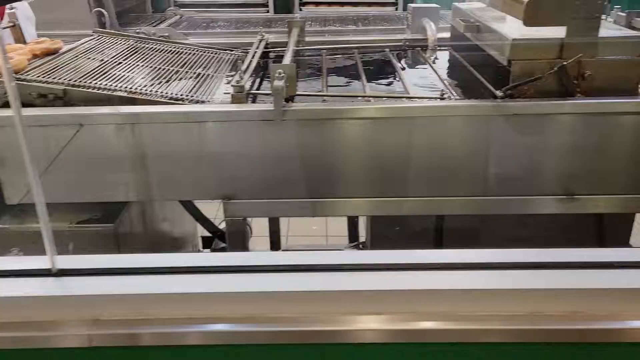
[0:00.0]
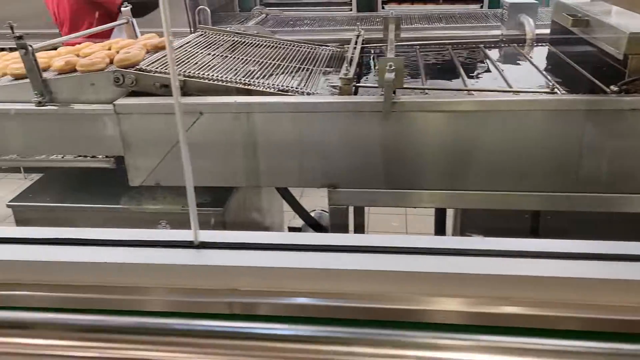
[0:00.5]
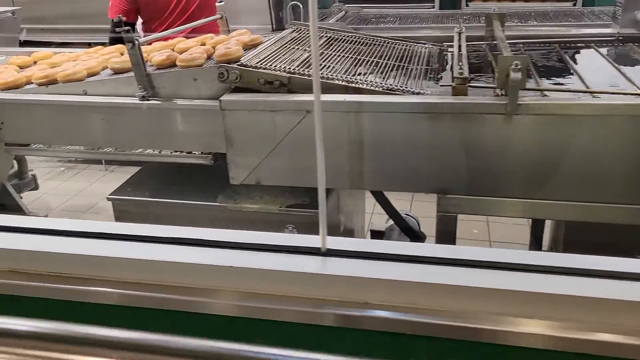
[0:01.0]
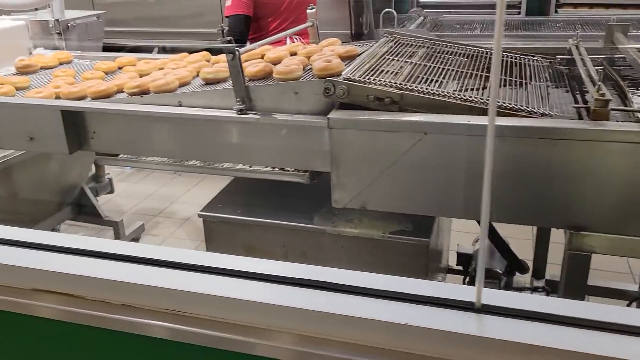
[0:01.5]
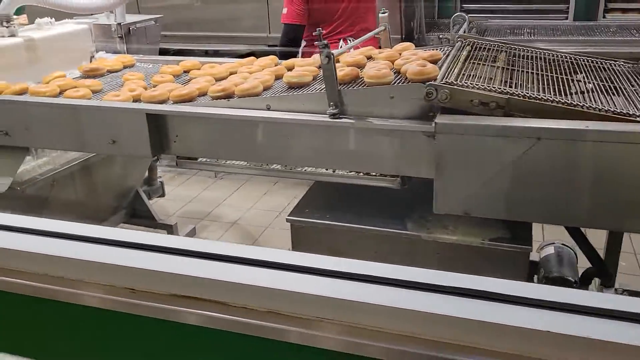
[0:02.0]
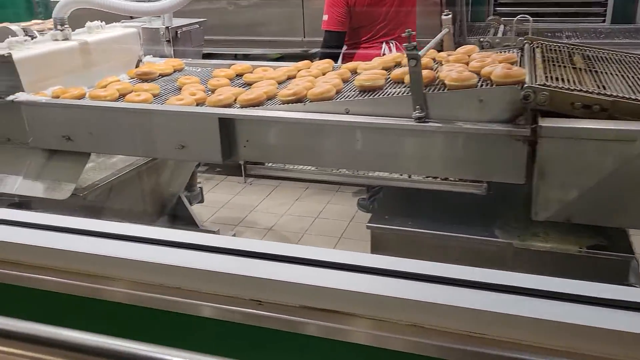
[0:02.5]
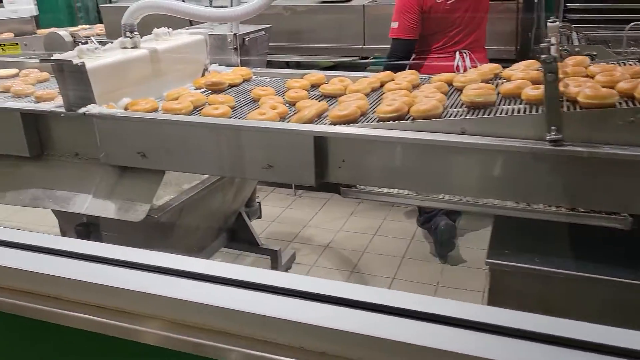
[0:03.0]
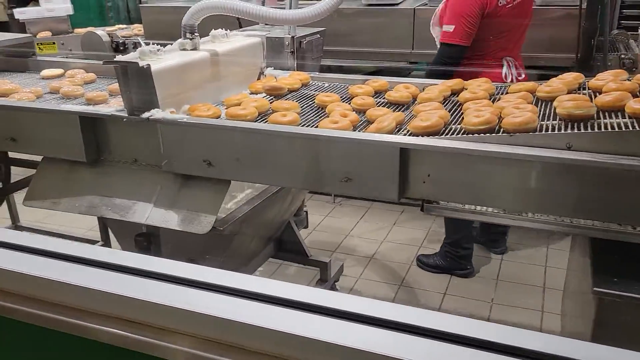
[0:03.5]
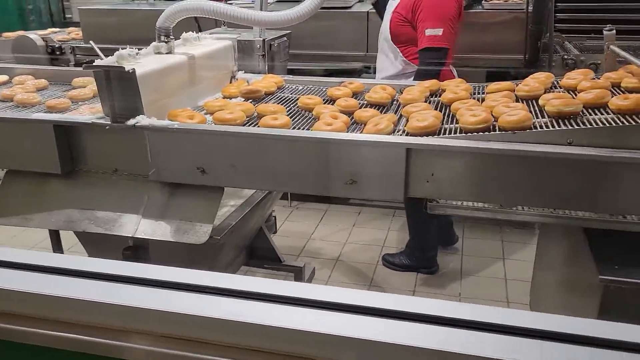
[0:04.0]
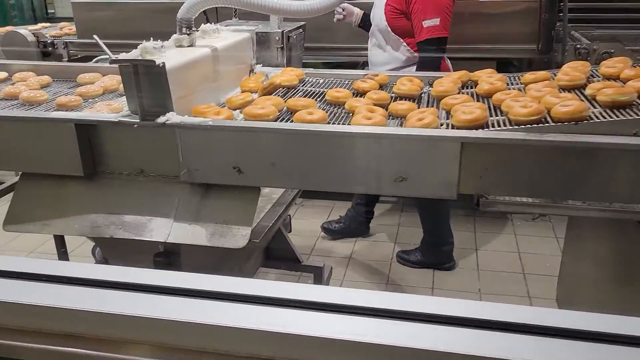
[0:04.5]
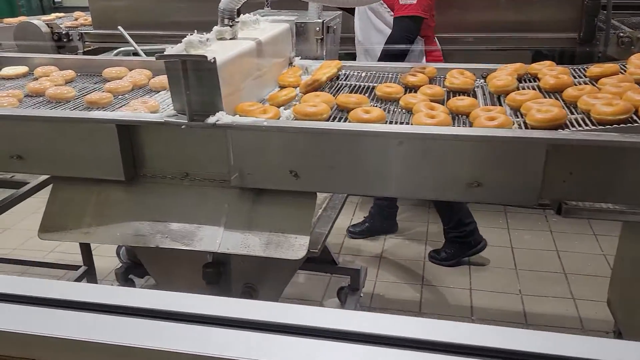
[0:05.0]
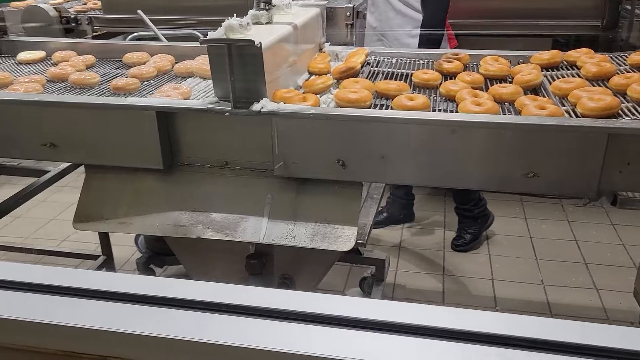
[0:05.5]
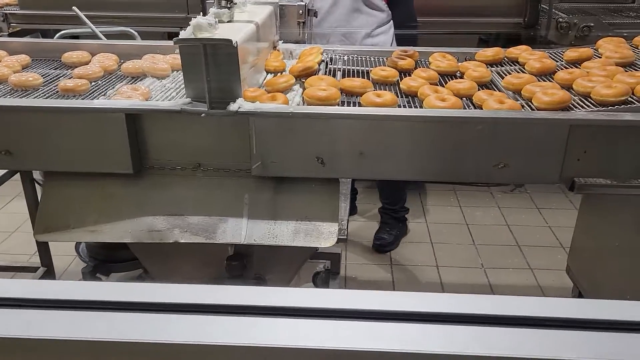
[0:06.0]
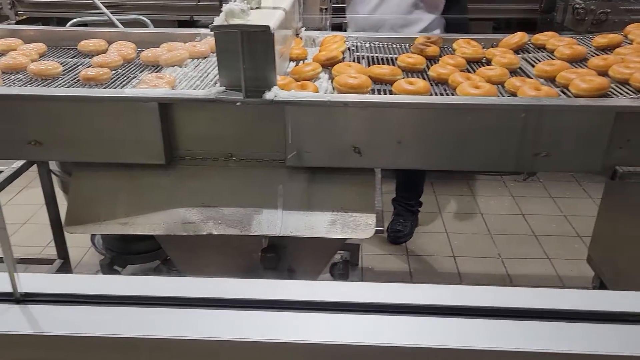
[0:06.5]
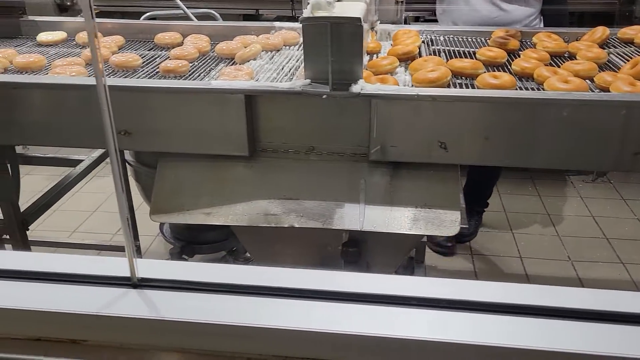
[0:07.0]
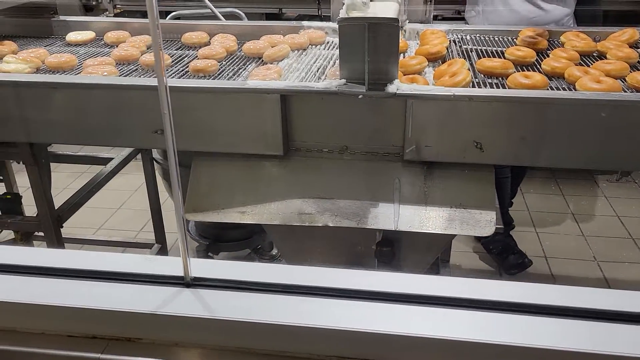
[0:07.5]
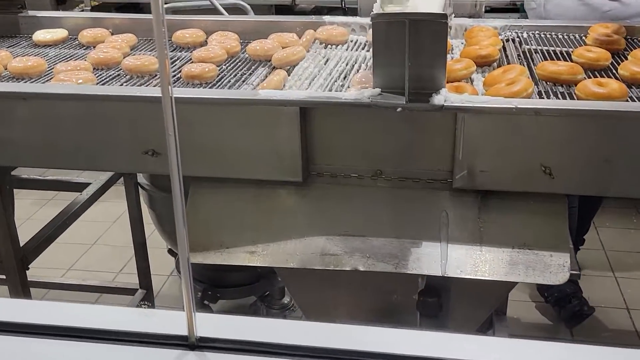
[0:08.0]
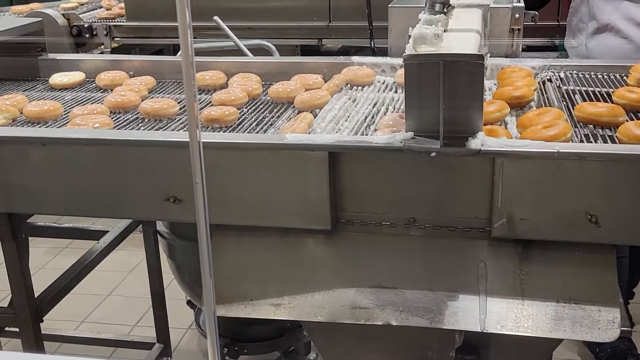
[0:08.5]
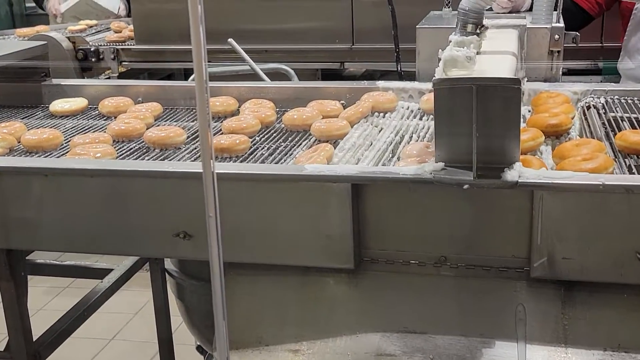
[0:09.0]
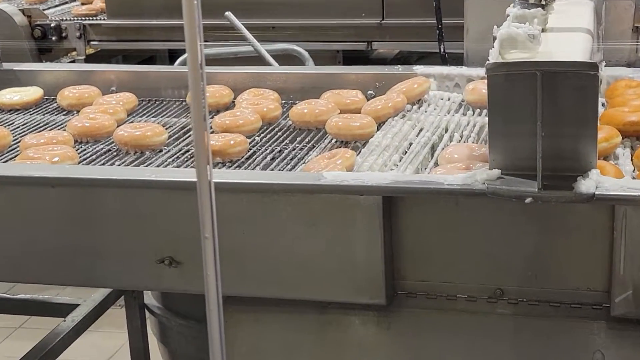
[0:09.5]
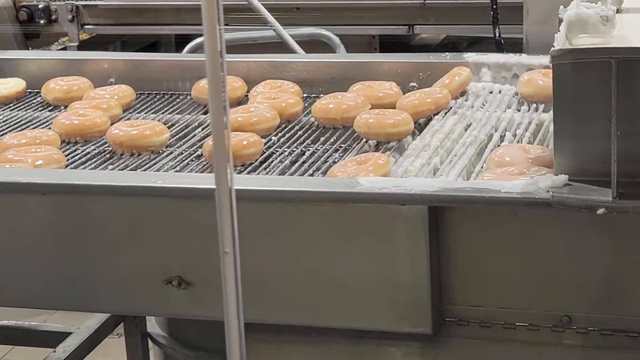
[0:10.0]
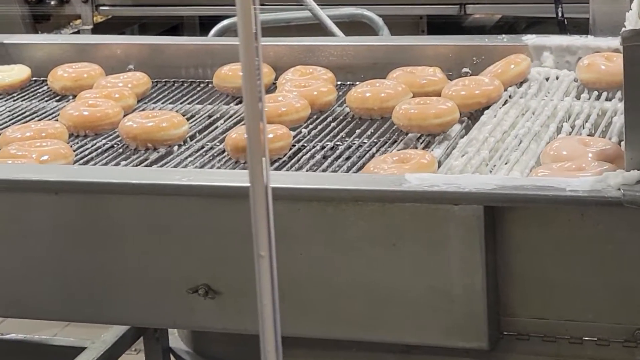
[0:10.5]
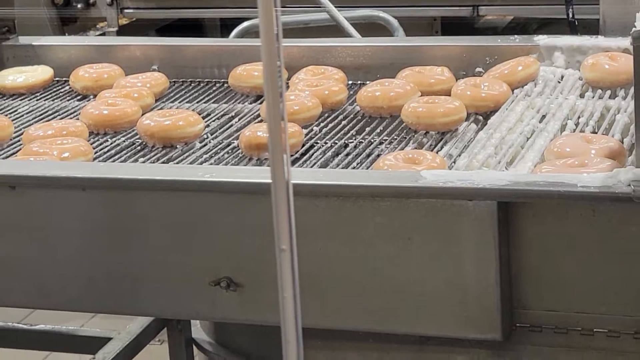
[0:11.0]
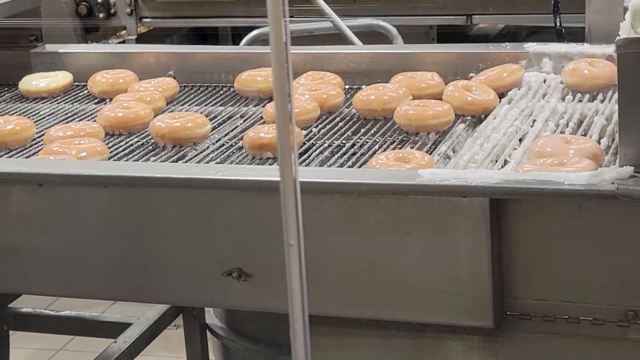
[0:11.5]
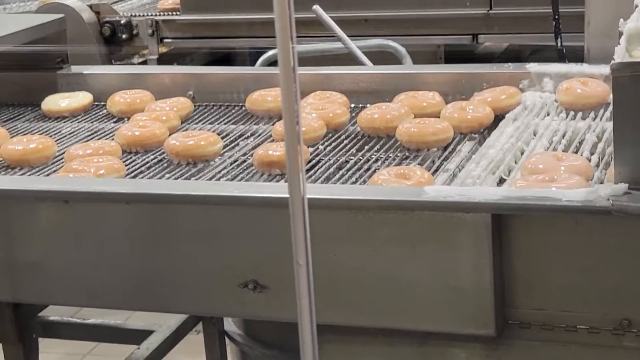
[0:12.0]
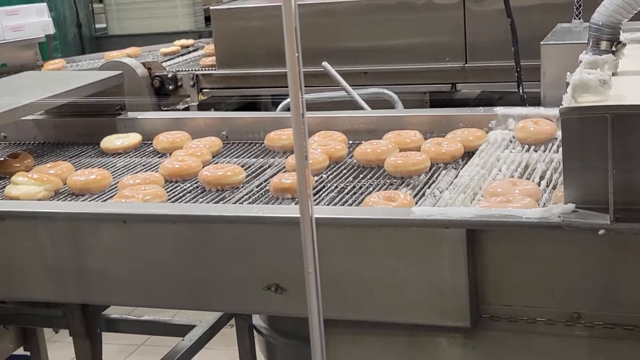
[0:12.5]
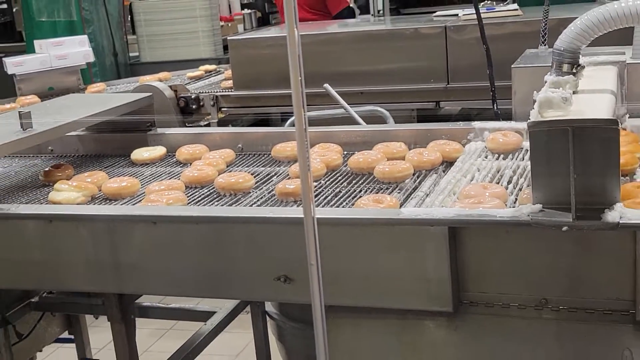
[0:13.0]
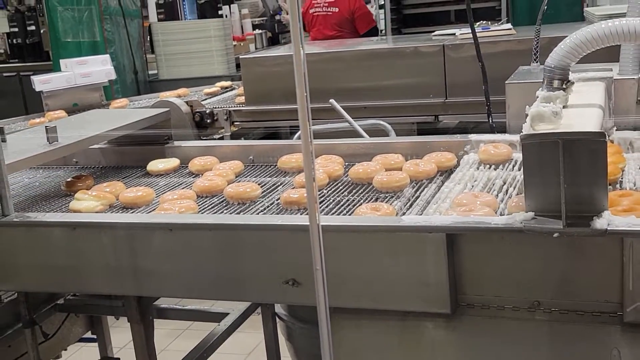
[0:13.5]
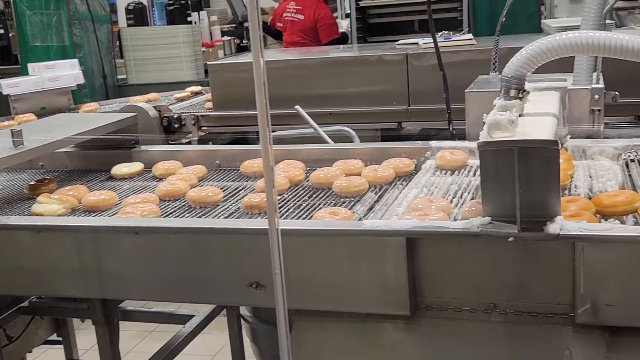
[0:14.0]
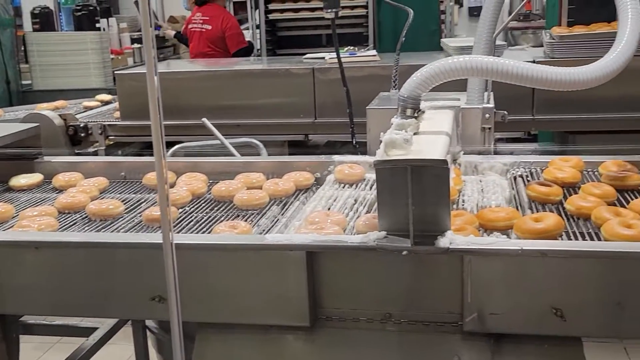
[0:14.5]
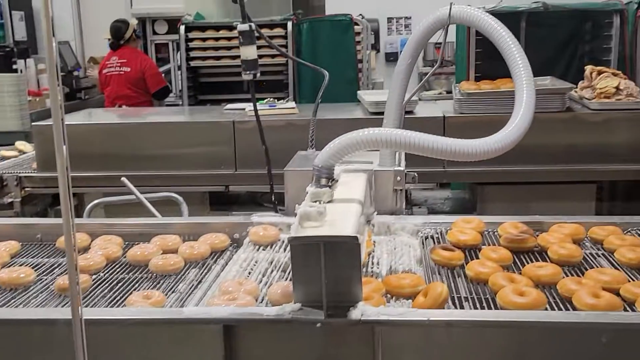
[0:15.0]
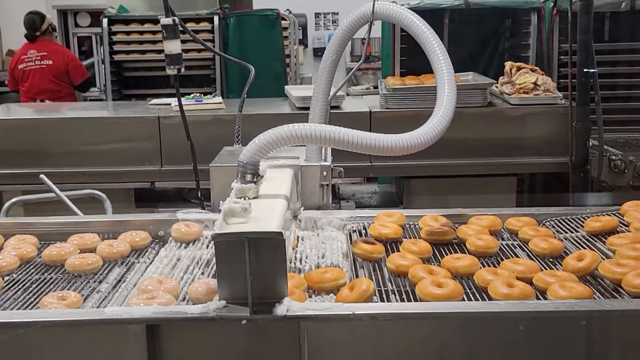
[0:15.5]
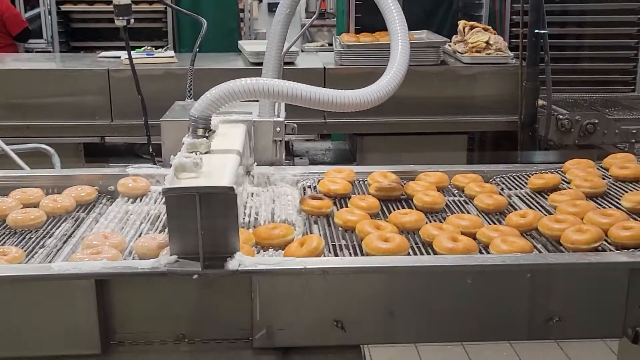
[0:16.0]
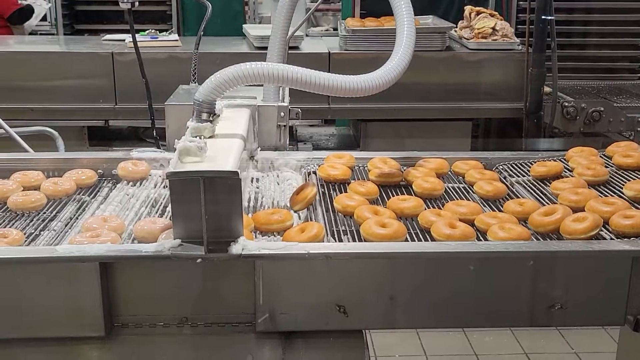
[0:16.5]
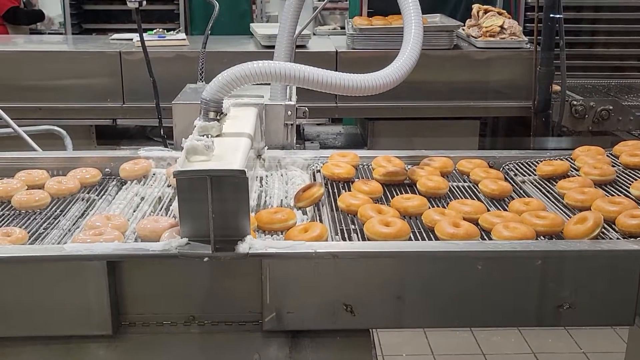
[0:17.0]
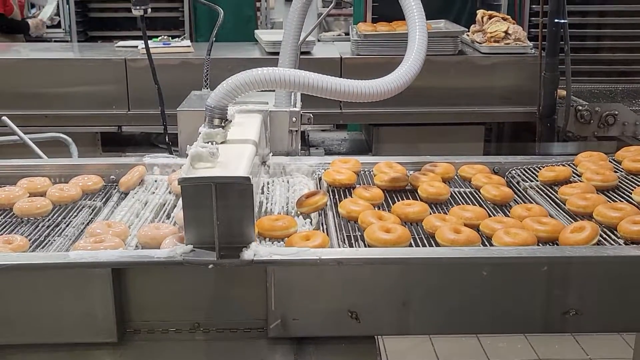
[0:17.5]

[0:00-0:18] What appears to be the inside of a factory shows a working, moving factory line preparing donuts. The donuts look kind of like they are from Krispy Kreme, as they are plain donuts having a glaze or frosting added to them. On the right side of the conveyor belts there are a lot of donuts that seem to have a plain breaded texture, and as they cross a white box on the conveyor line they come out on the left side shiny and coated in some kind of transparent glaze frosting. The conveyor belt moves pretty slowly. A few staff members are seemingly working on other tasks without really having to attend to or carefully observe the donuts being glazed on the conveyor belt.